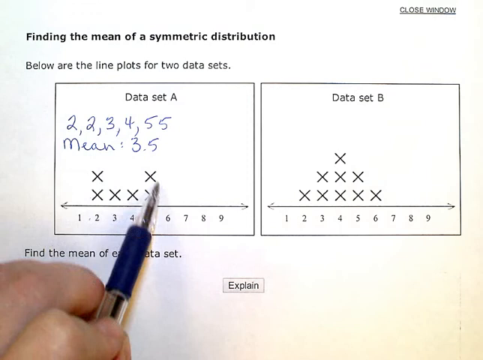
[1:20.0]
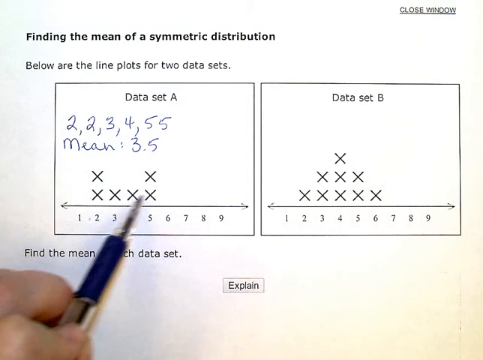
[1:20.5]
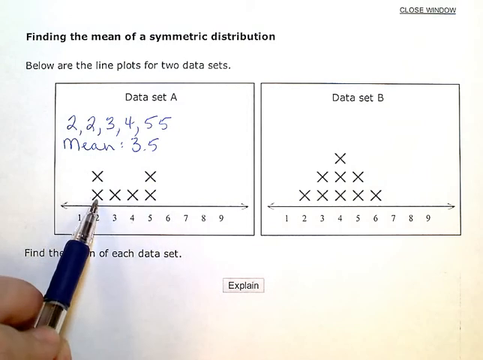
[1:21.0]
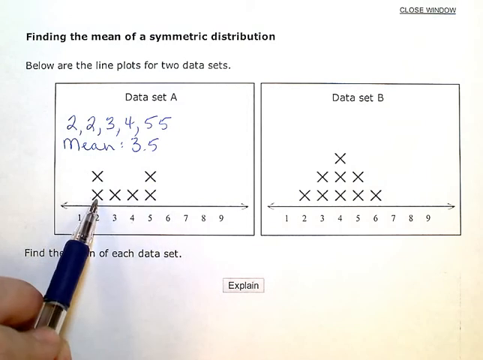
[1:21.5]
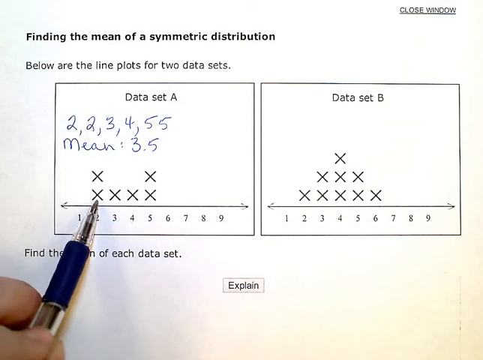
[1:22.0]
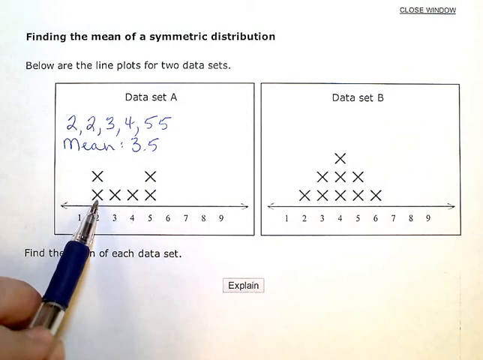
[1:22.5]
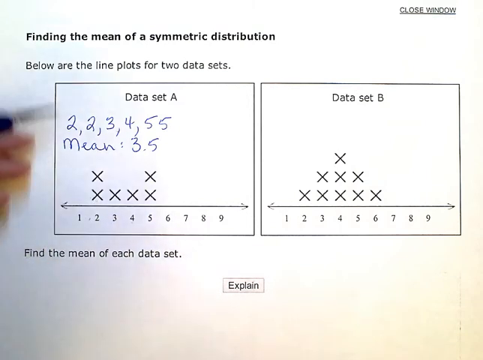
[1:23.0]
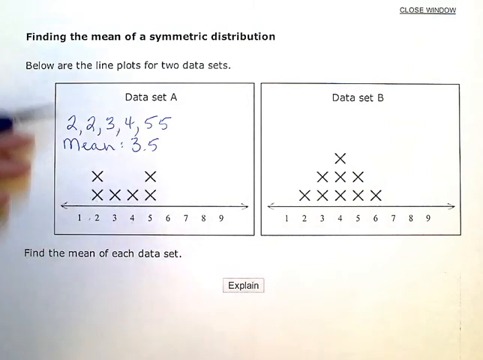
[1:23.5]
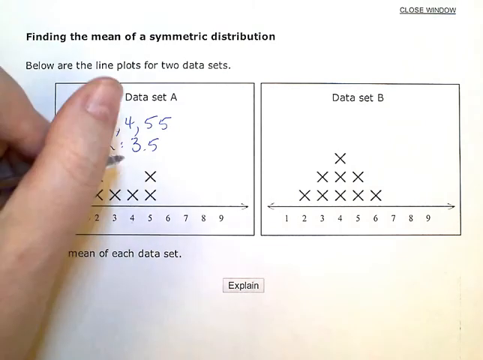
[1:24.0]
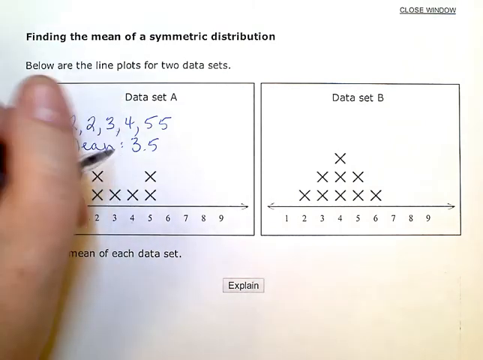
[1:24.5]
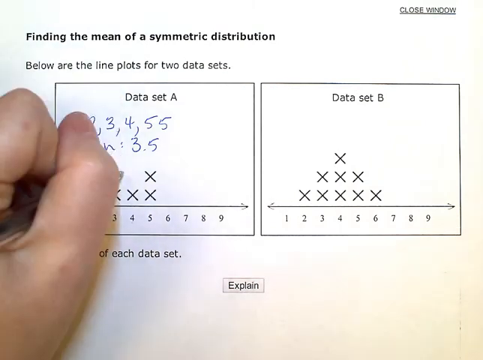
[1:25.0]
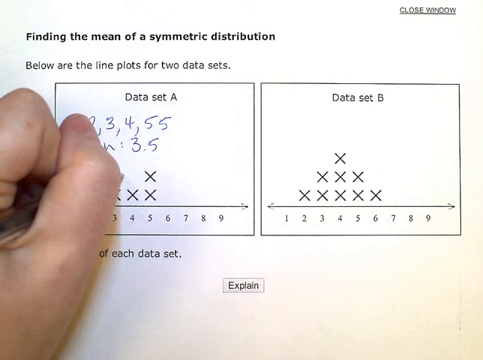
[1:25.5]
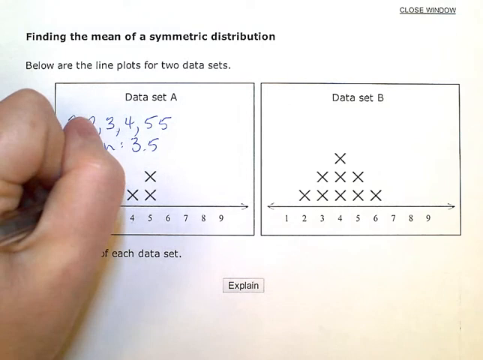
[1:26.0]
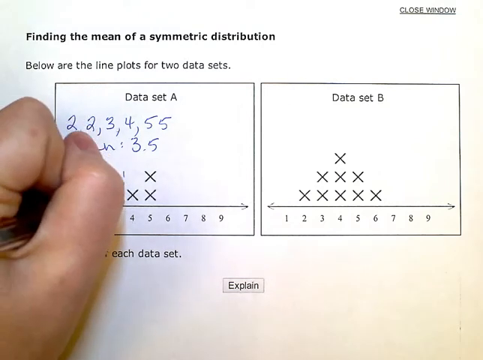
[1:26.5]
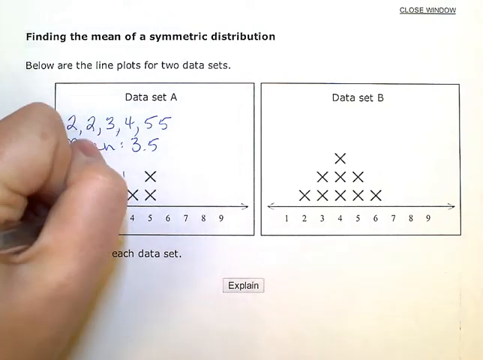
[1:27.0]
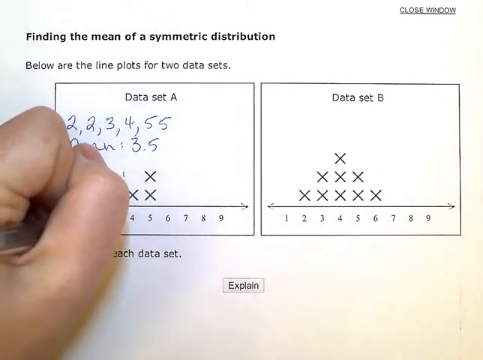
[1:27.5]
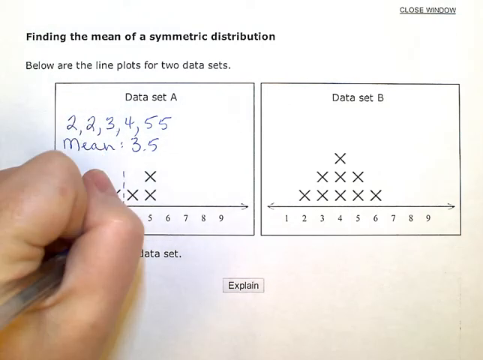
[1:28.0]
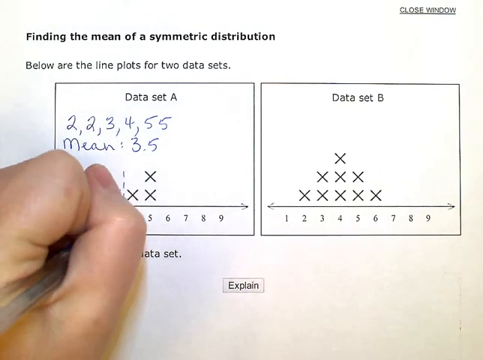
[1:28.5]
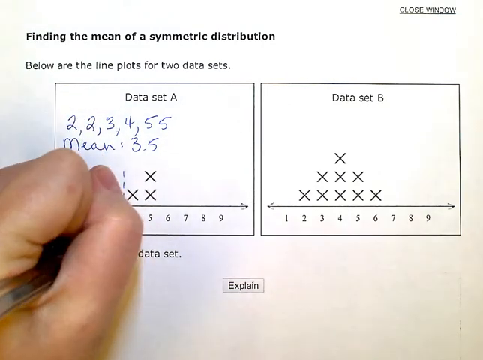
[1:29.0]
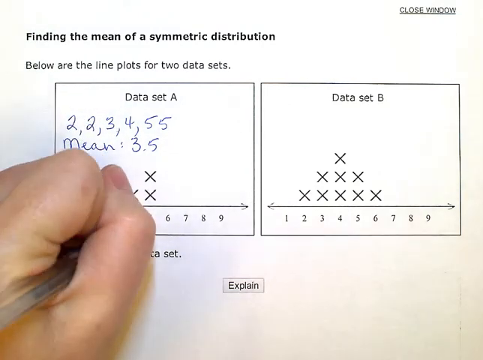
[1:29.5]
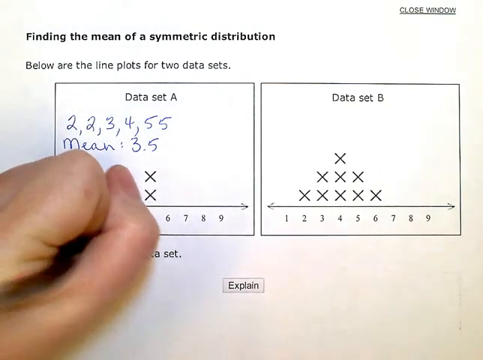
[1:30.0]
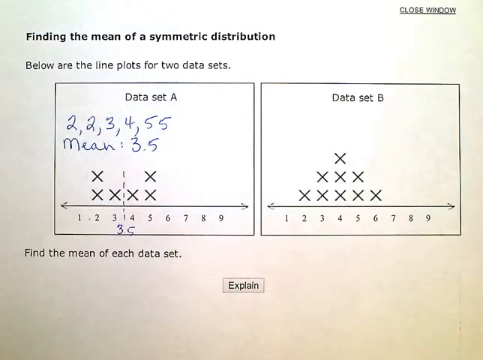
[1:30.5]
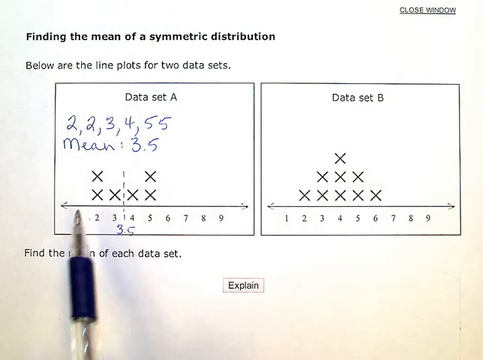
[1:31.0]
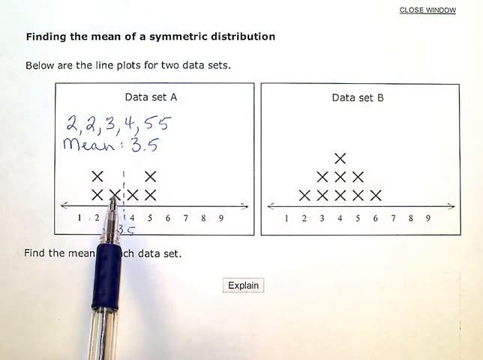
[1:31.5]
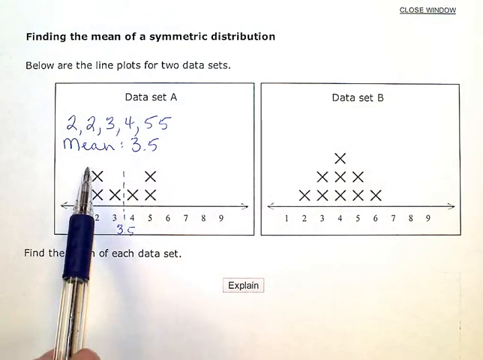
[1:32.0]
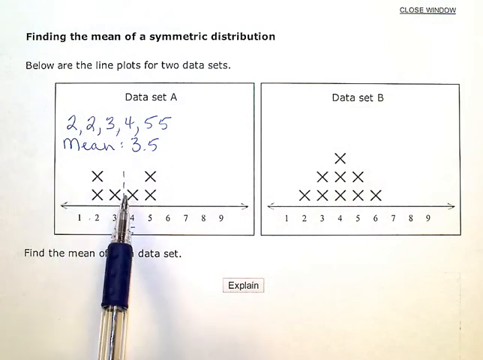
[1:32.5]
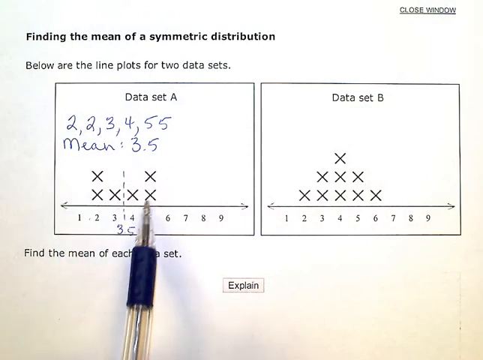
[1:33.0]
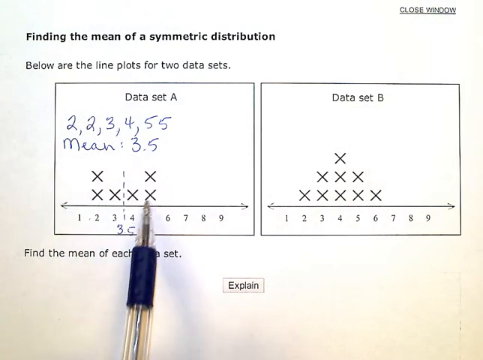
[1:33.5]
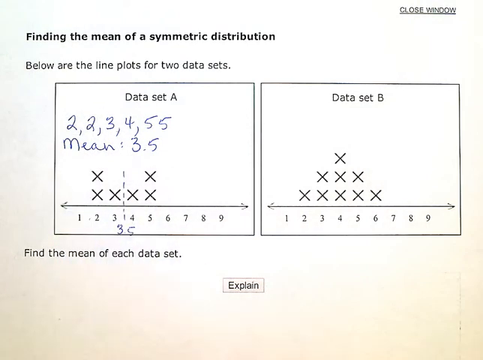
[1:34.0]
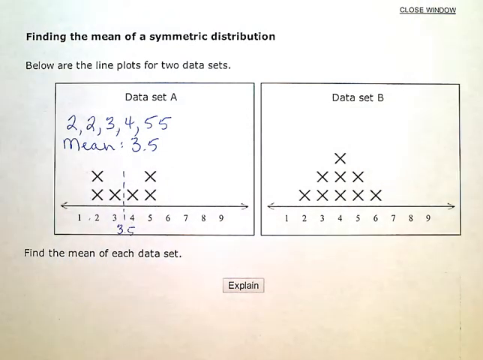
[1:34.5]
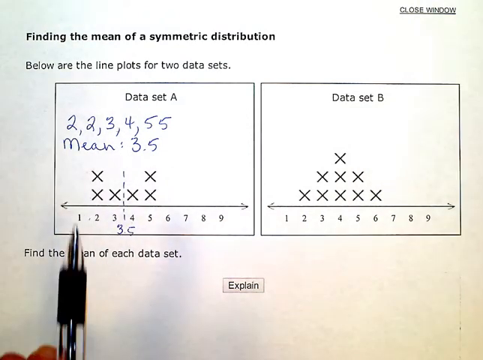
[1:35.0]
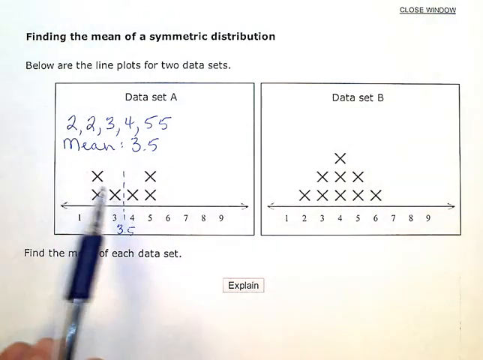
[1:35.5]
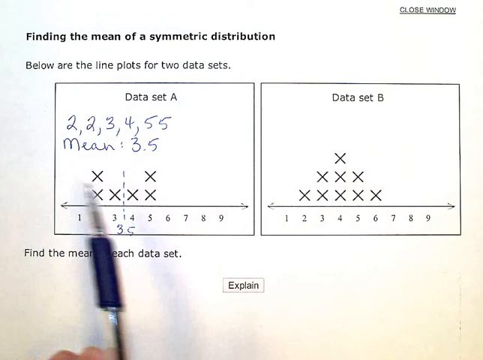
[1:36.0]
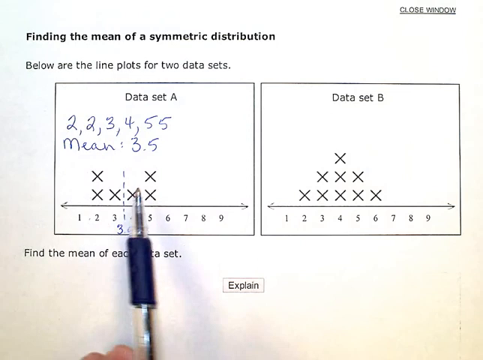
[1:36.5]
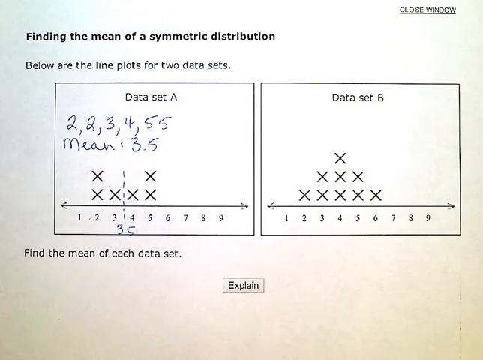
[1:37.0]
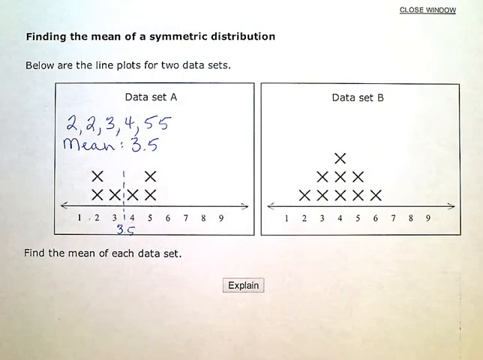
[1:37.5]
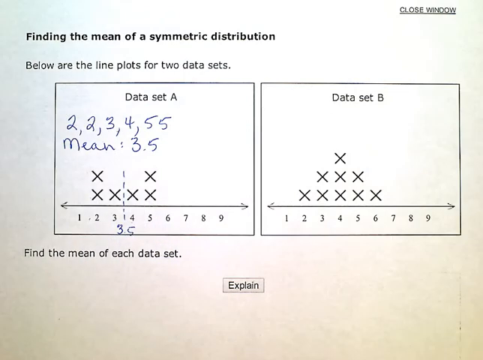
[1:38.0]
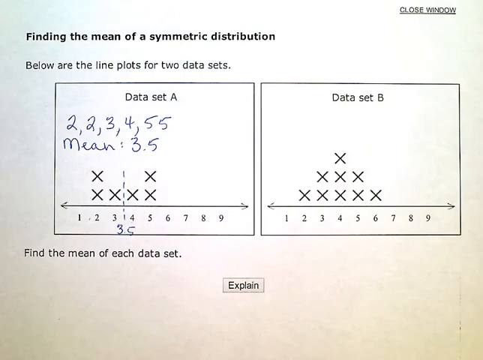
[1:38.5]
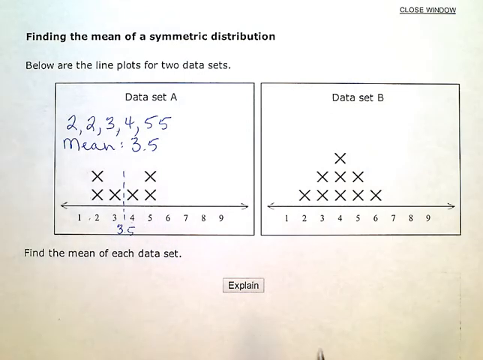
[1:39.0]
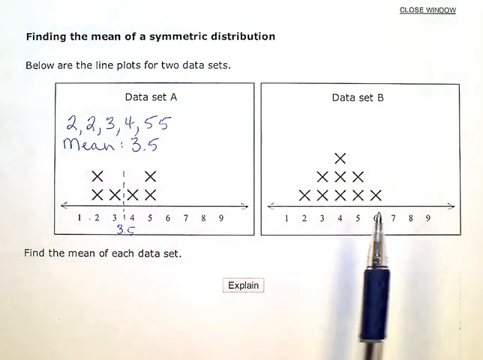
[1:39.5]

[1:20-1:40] She moves the pen back and forth between the fives and the twos, pressing down, then pulls her hand off to the side. She appears to start writing above the x's, drawing a vertical dotted line between the 3 and the 4 to show the mean is not at three or four but at three and a half, and she writes that underneath in a darker blue ink. She then moves over to data set B and starts pointing with the ballpoint pen there. She is writing on paper rather than on a computer; the page seems to be a printed screenshot or photo of a page from a website.